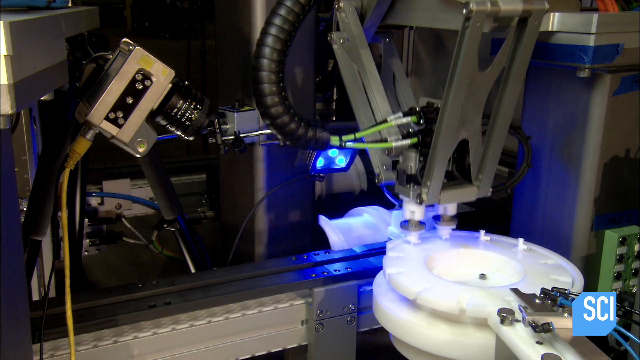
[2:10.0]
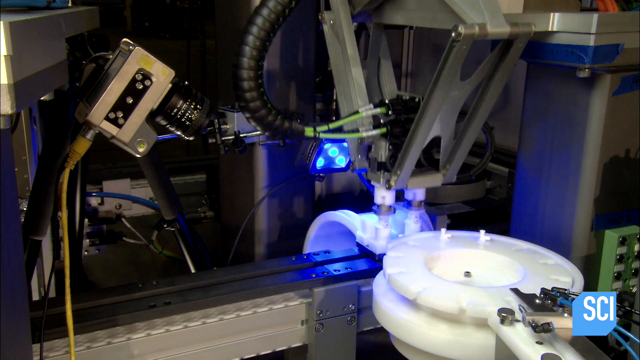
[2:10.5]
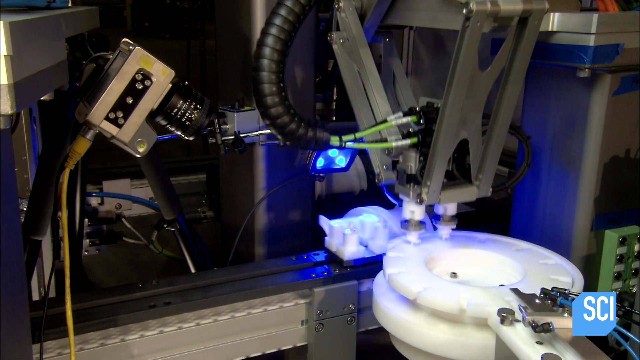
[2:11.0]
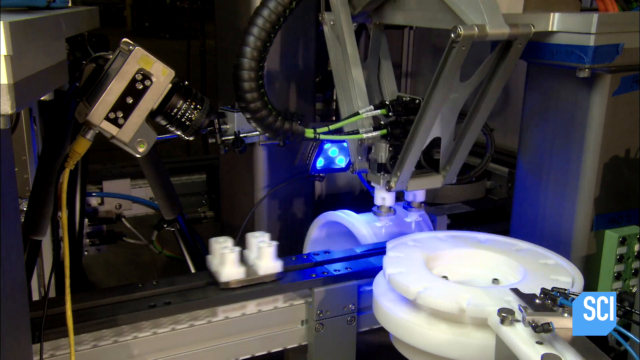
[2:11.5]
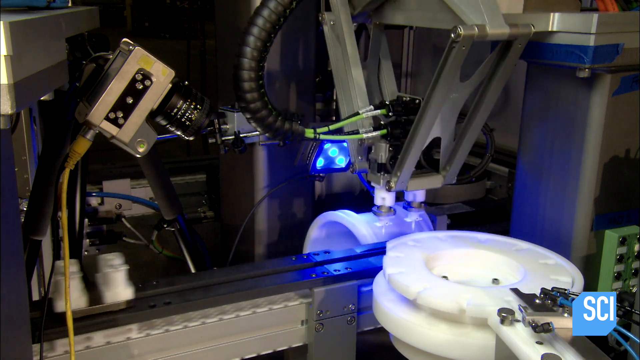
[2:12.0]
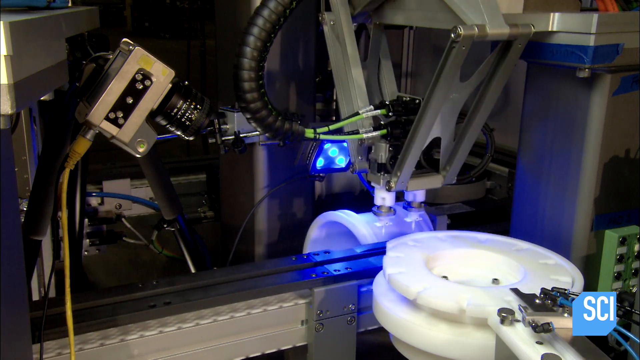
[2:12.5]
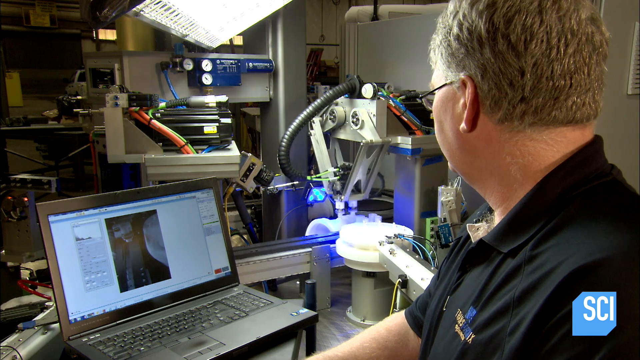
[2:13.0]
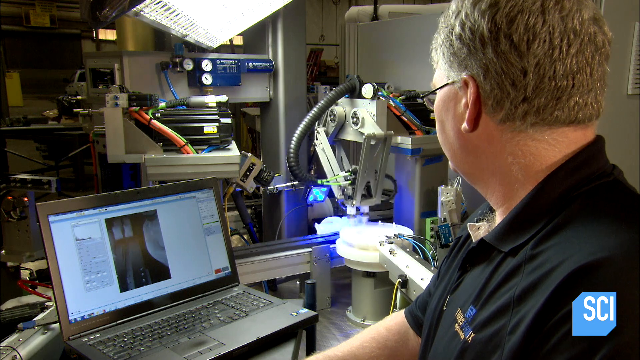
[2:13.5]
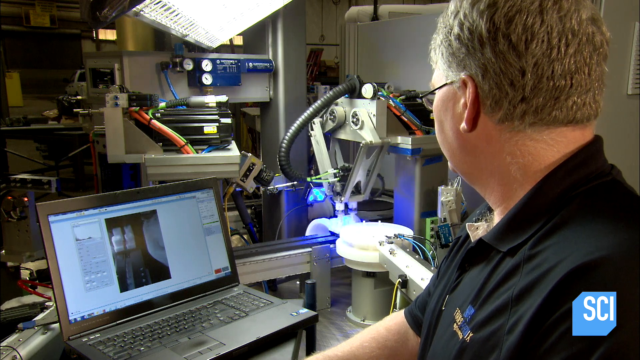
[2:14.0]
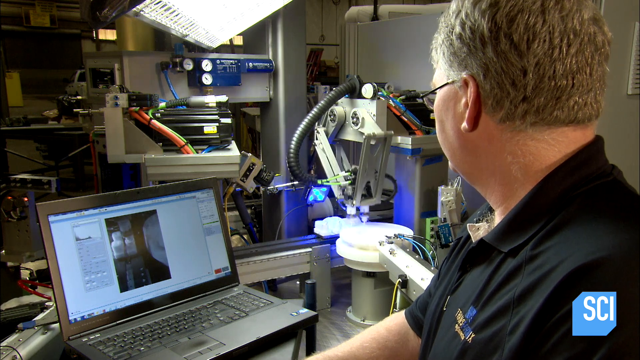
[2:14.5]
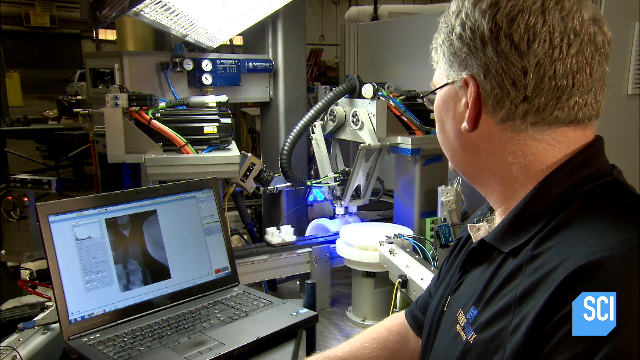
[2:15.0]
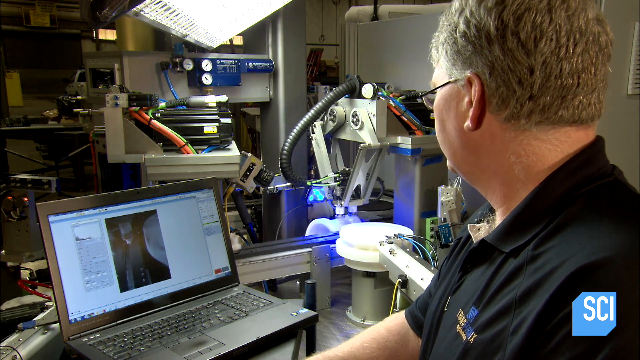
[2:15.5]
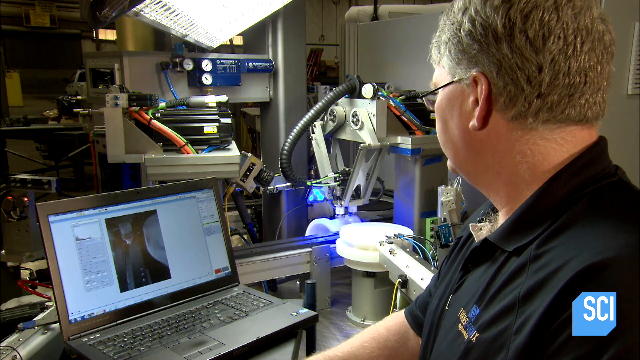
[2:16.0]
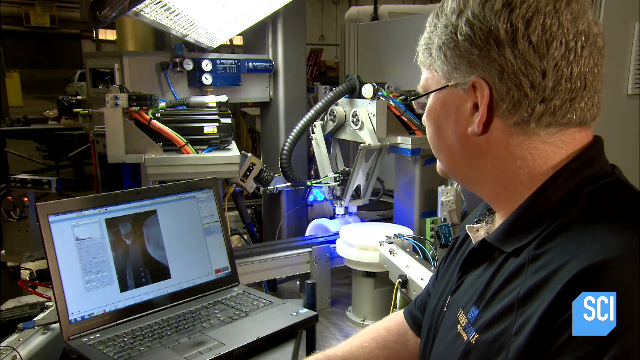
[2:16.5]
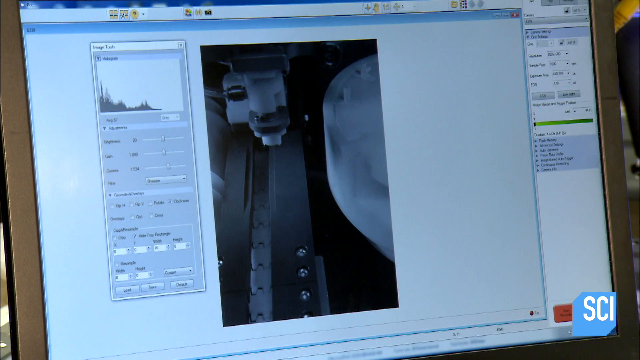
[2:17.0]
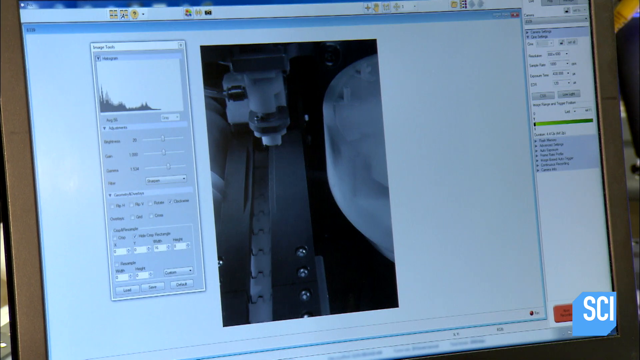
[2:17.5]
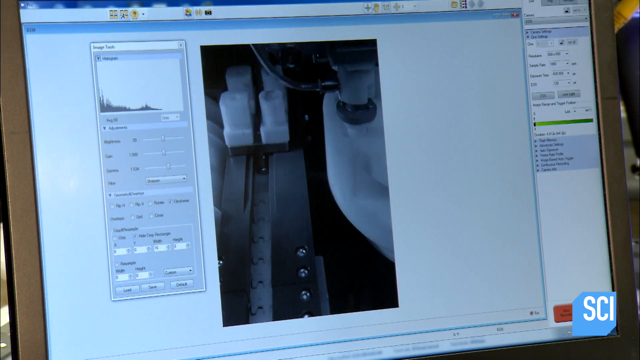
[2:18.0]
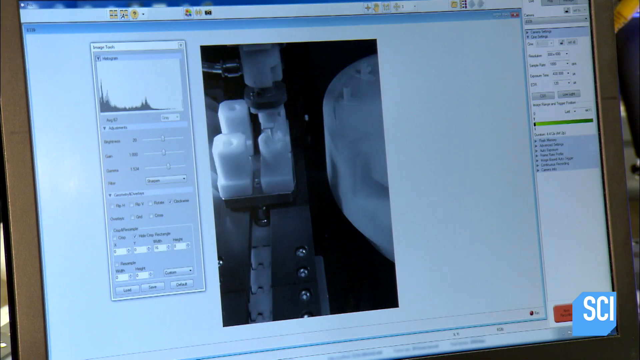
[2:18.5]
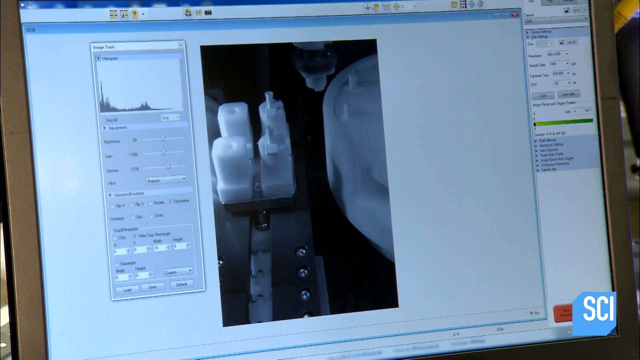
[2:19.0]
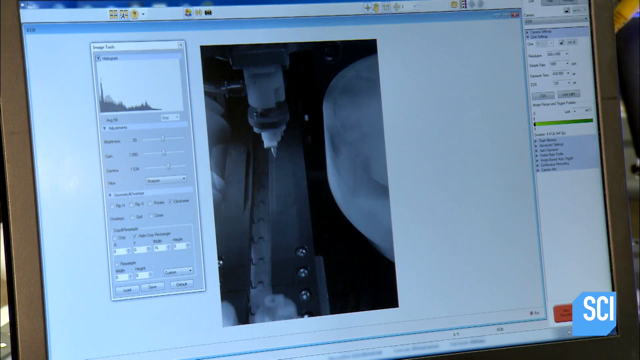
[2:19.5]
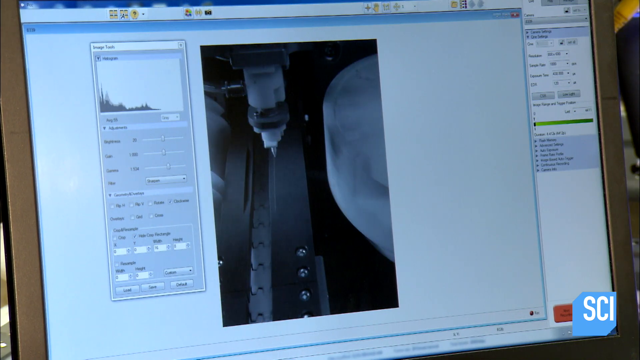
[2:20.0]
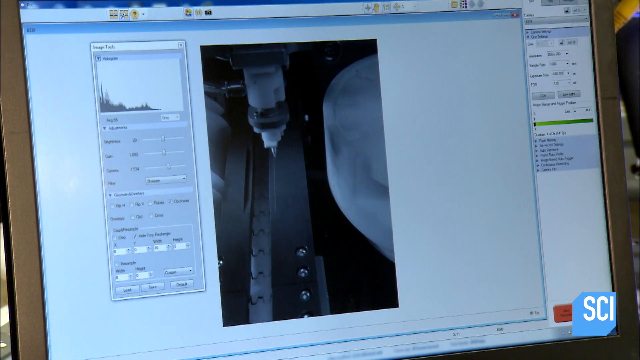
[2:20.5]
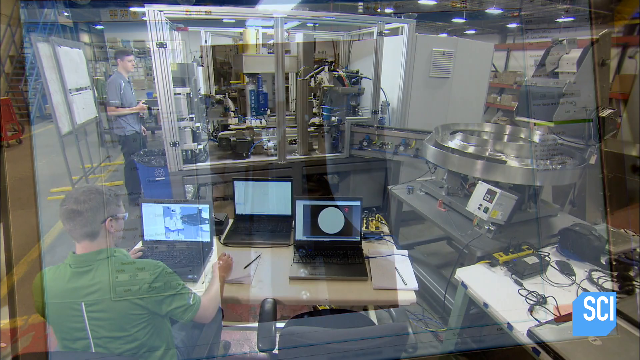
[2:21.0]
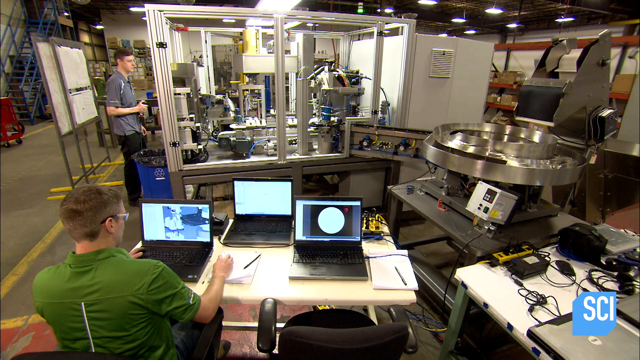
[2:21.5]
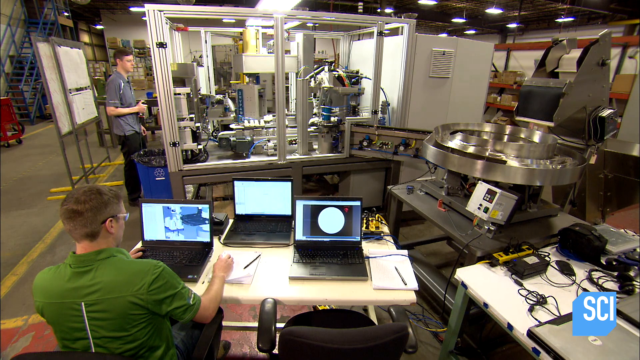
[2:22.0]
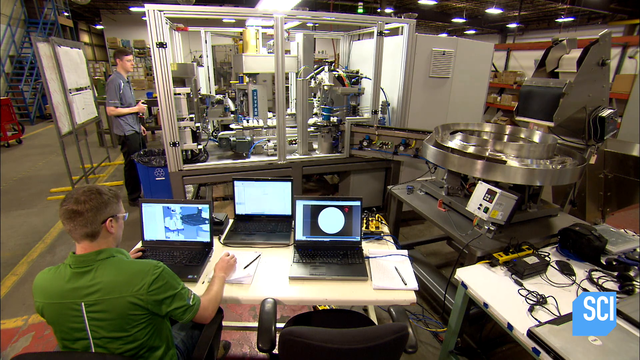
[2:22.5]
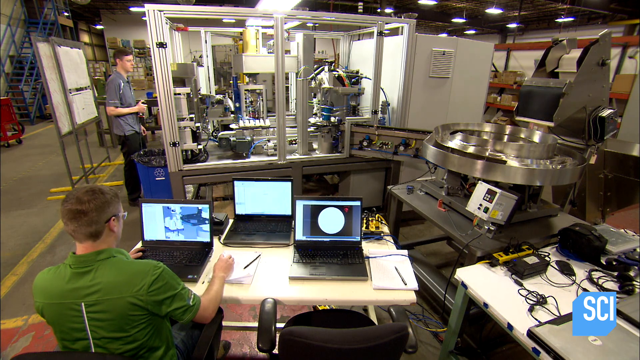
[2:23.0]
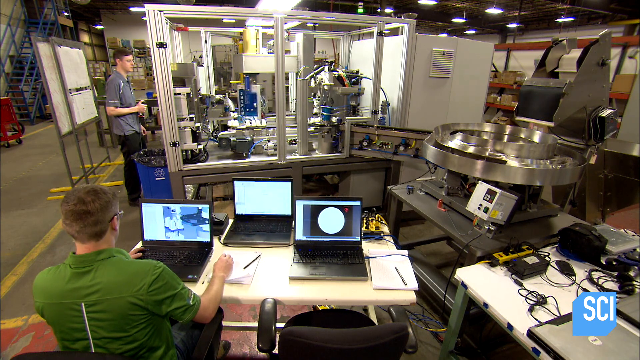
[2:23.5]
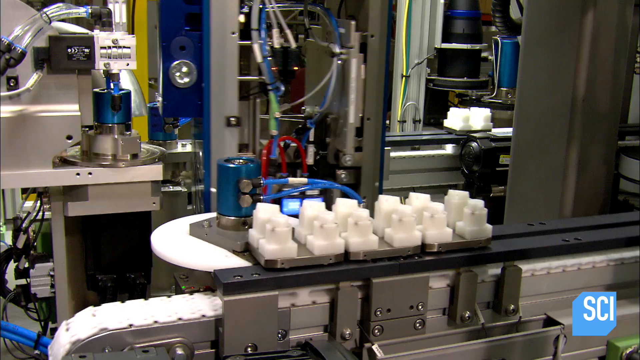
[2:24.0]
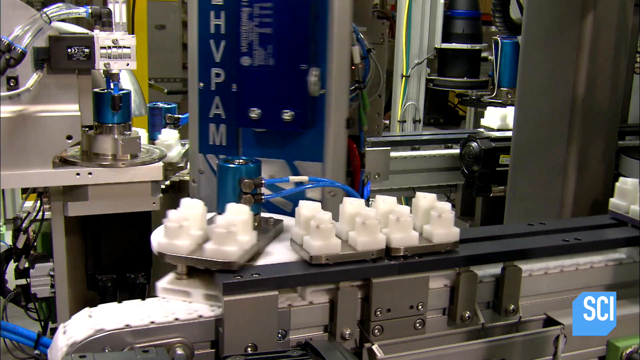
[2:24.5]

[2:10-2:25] The same machine goes back and forth between a white, spinning round piece and other pieces, and looks like it is putting something onto pieces on a moving belt. It places pieces onto the belt, and the belt carries them down the line. A man in a blue shirt sits next to it, watching a computer screen; he looks at the computer, at the machine, and back at the computer. The computer screen shows a video recording of what the machine just did, showing the pieces the machine puts on the belt going down the belt. In the background there looks to be a lot of hardware. Then a man stands in front of a box with glass windows that has machines moving inside.